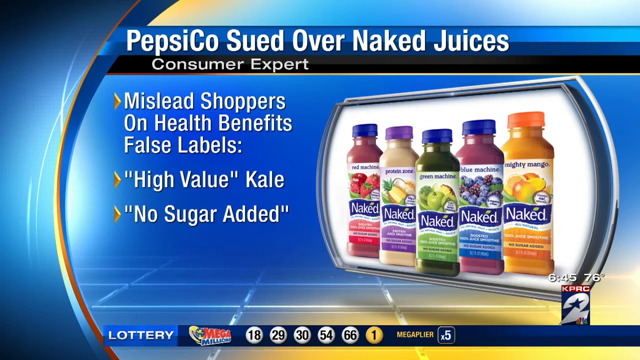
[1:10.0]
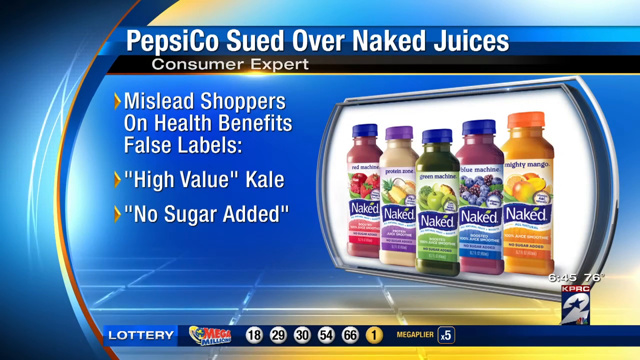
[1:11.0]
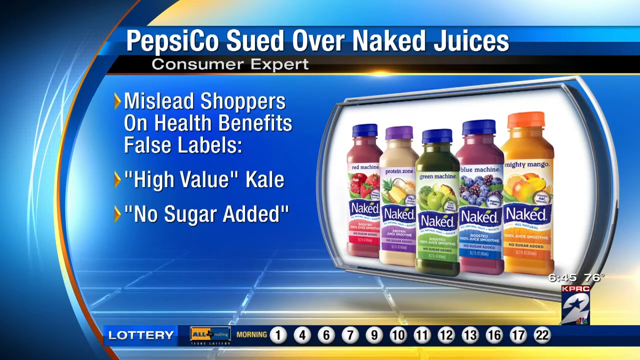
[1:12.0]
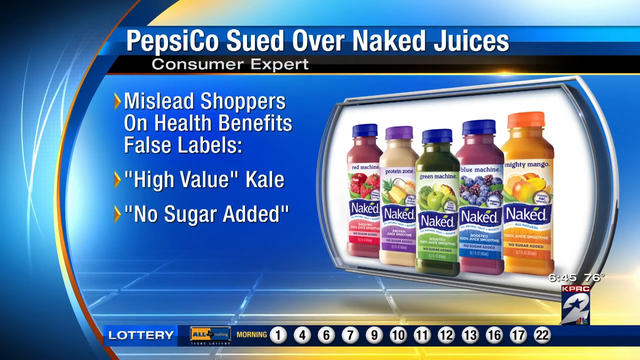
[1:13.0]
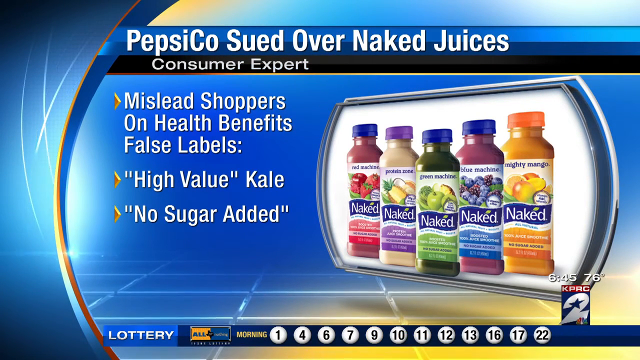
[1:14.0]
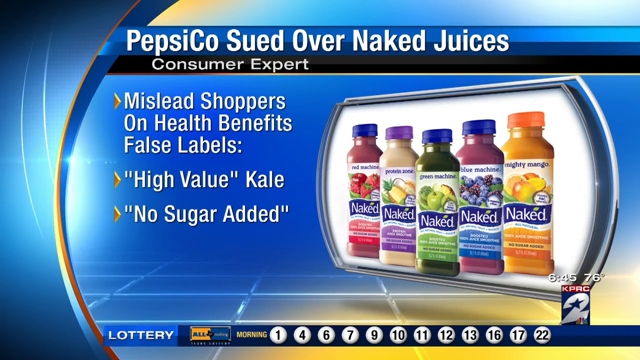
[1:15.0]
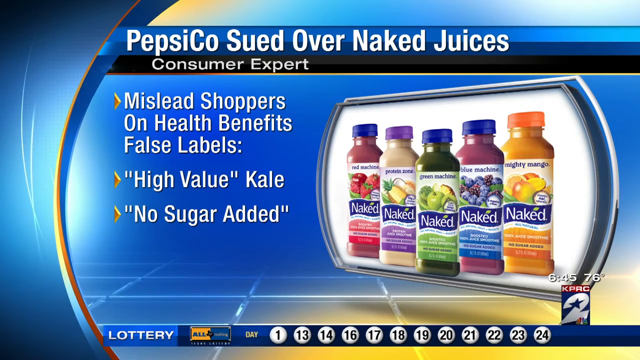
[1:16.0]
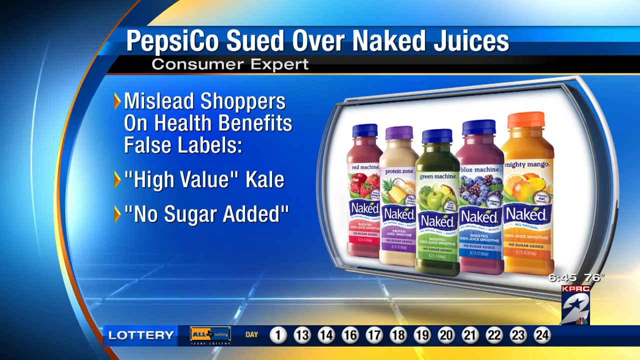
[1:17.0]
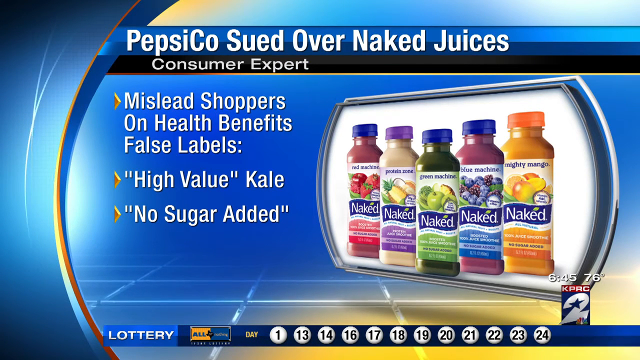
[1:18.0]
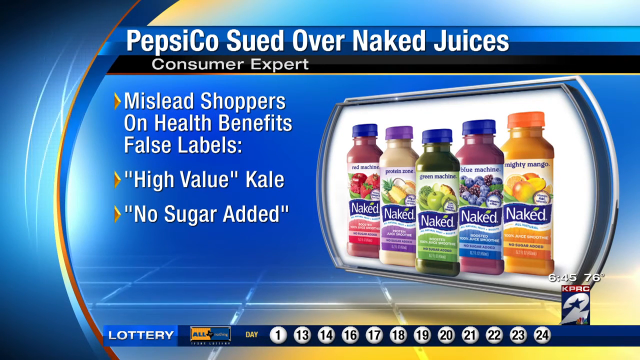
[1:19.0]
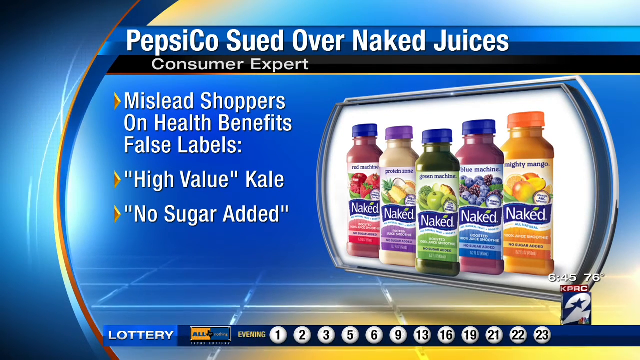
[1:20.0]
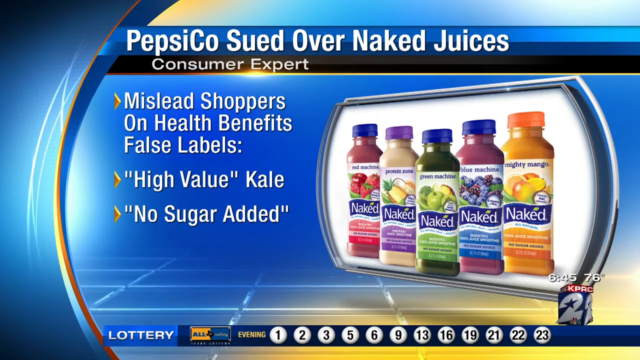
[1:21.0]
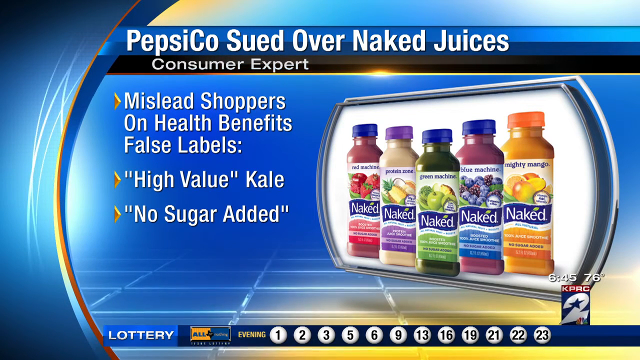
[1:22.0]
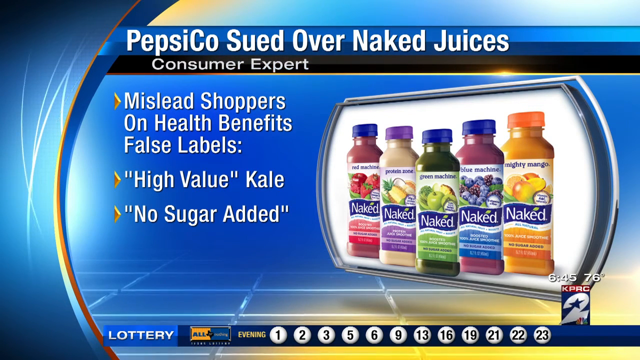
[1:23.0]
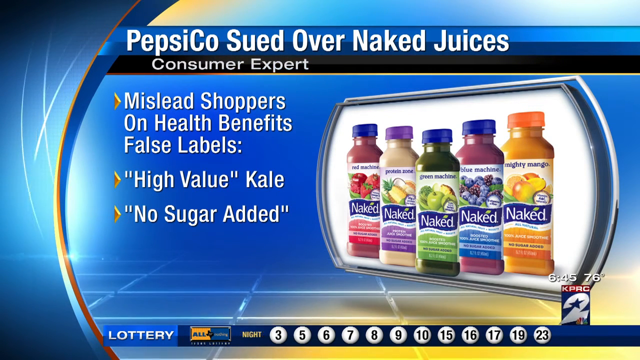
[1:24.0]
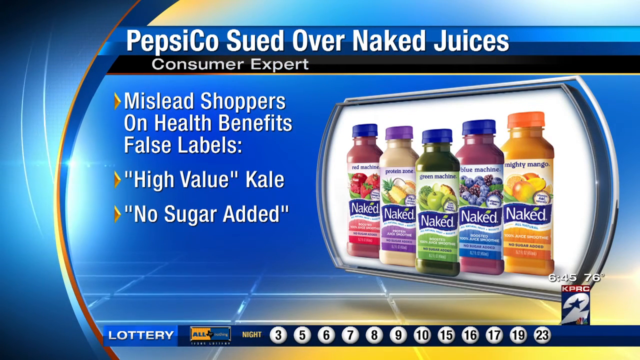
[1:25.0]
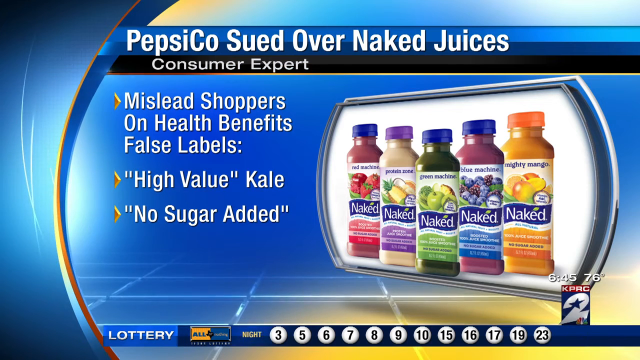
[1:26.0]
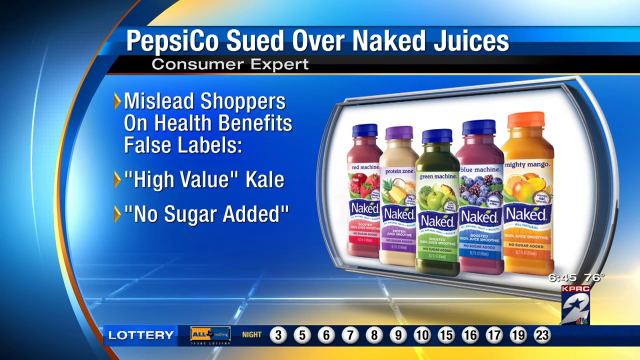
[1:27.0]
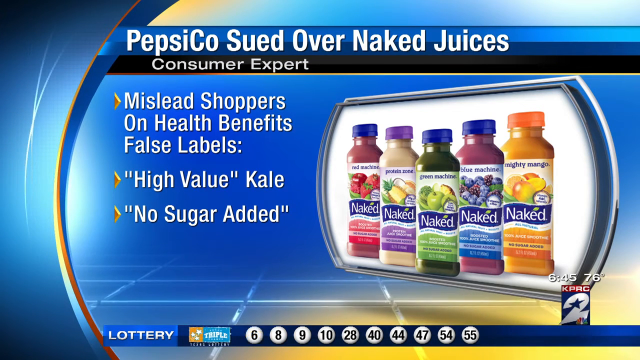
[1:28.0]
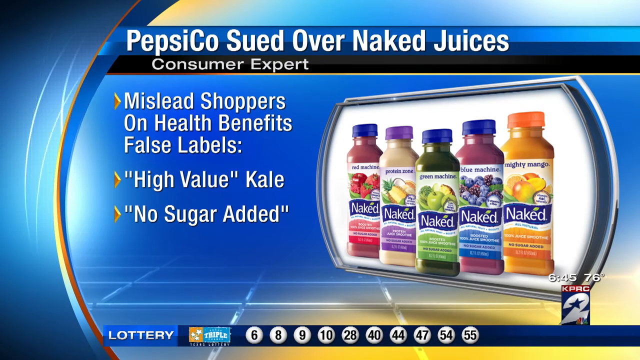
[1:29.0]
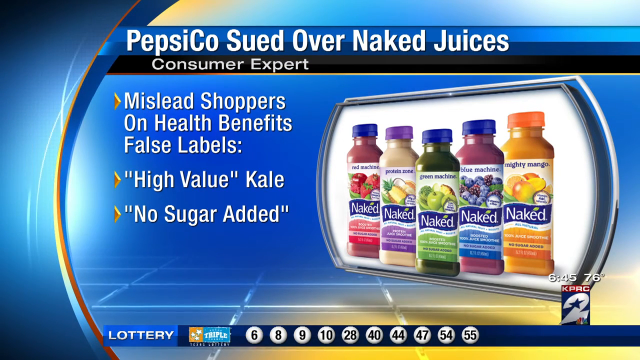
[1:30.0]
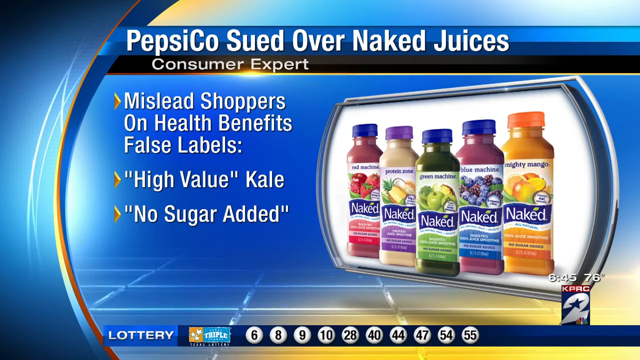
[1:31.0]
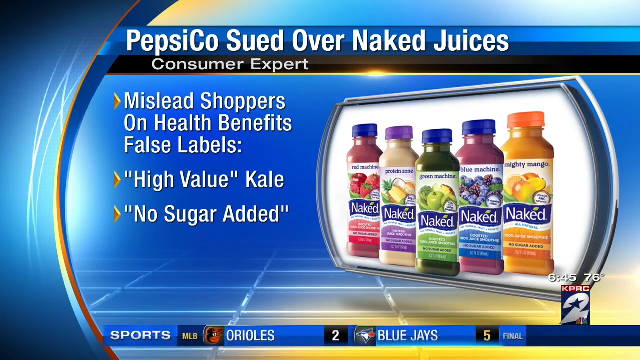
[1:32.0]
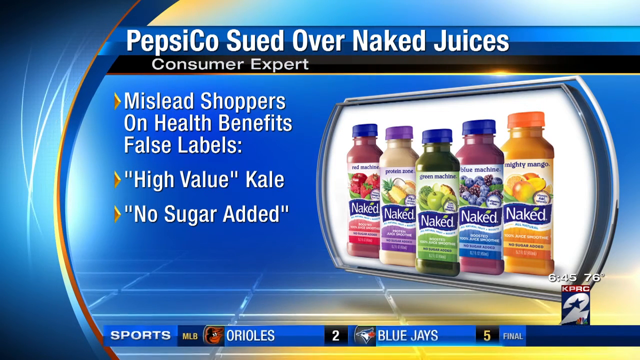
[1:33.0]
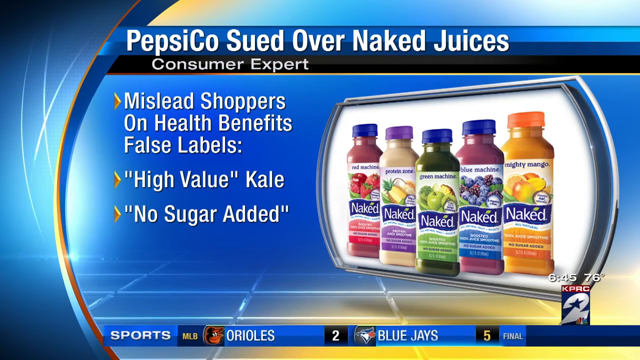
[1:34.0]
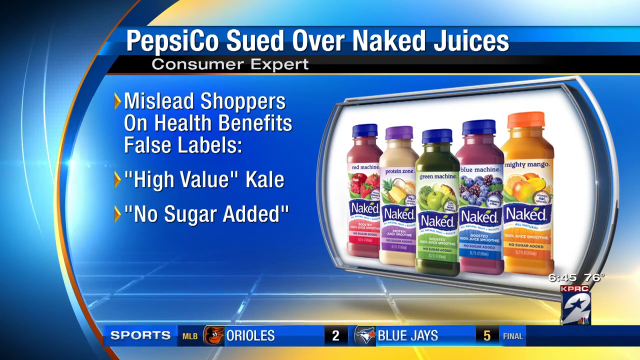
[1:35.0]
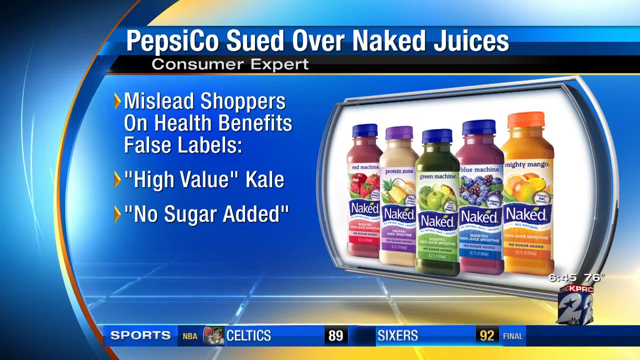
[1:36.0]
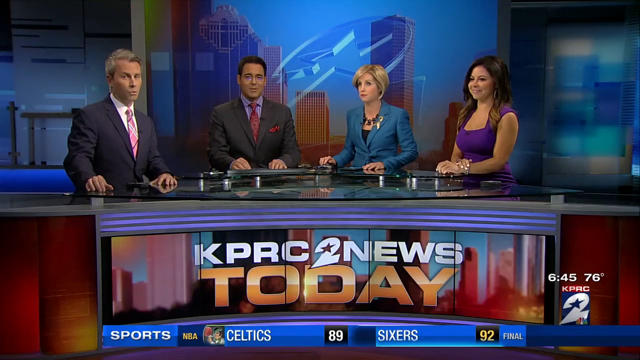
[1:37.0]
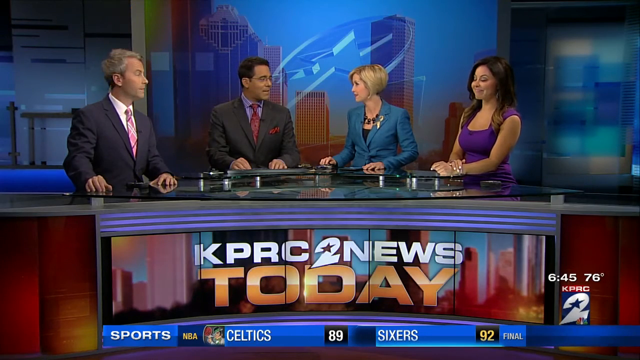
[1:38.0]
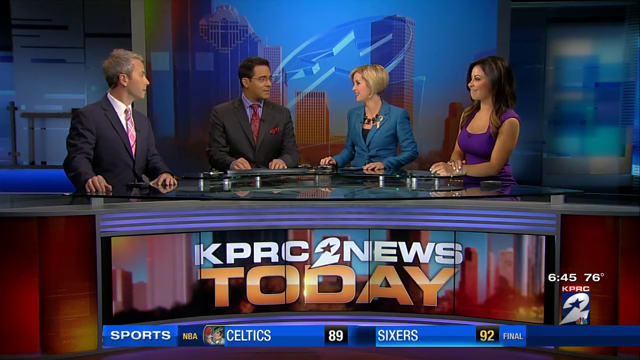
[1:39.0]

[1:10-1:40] A headline on The Consumer Expert reads "PepsiCo. suit over naked juices, consumer expert, mislead shoppers," along with "false label," "high value kale" and "no sugar added." The Naked juice products appear on the right in different colours and flavours: all mighty mango, blue cheese, green apples, pineapple and red apple. Lottery numbers are displayed along the bottom, with the mega playa times 5 numbers 18, 29, 30, 54, 66 and 1. The day's lottery numbers are also shown: 1, 13, 14, 16, 17, 18, 19, 20, 21, 22, 23 and 24, along with numbers from the evening and night. Sports results appear at the bottom as well: MLB Orioles versus Blue Jays, with the Blue Jays at 5 and the Orioles at 2. The view then shows news reporters, four of them sitting at a glass table.